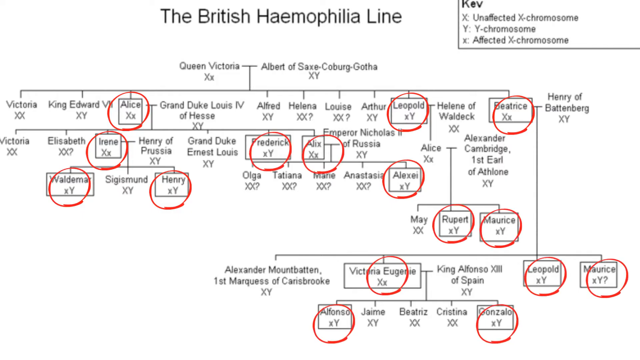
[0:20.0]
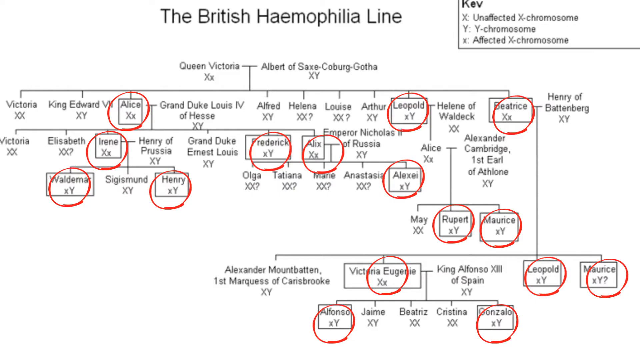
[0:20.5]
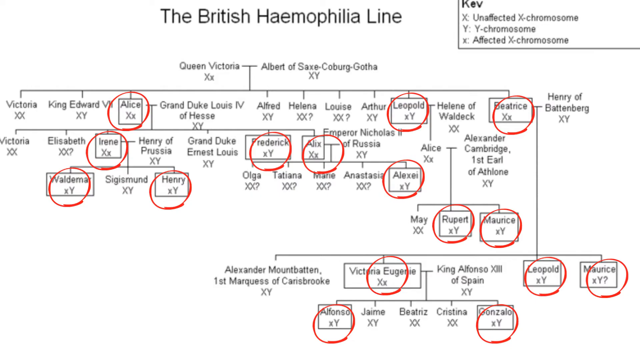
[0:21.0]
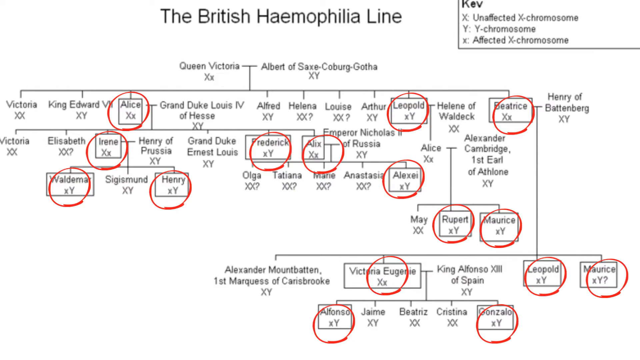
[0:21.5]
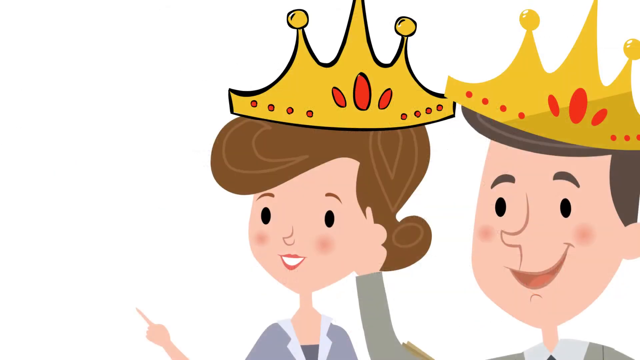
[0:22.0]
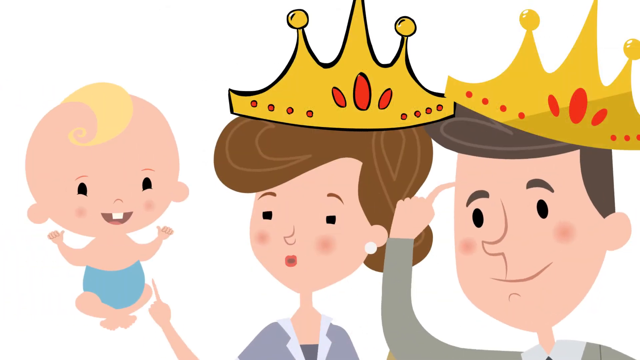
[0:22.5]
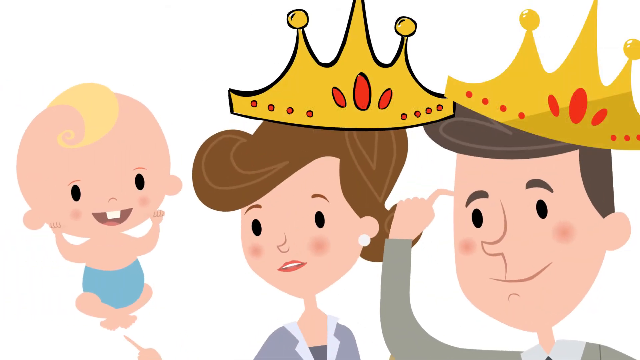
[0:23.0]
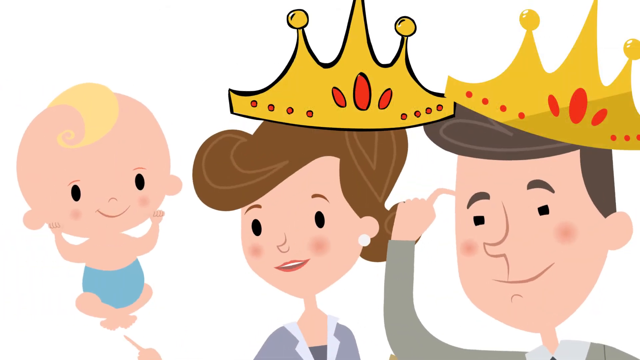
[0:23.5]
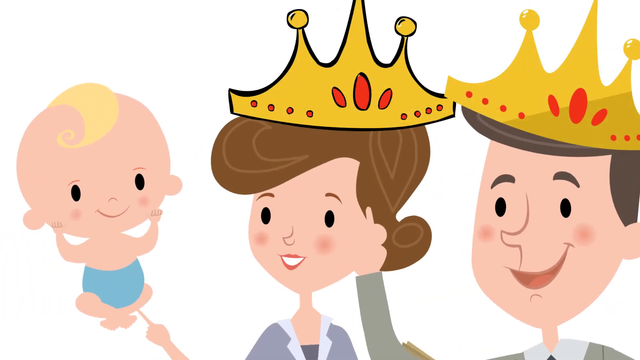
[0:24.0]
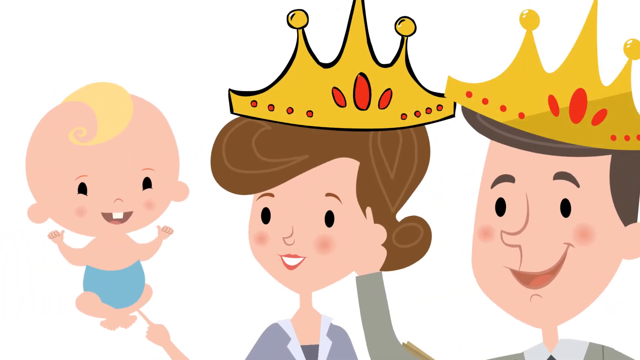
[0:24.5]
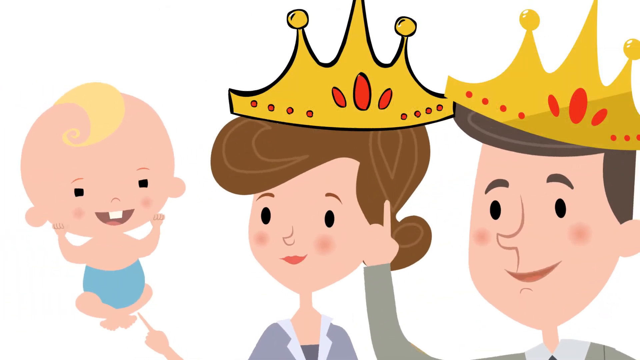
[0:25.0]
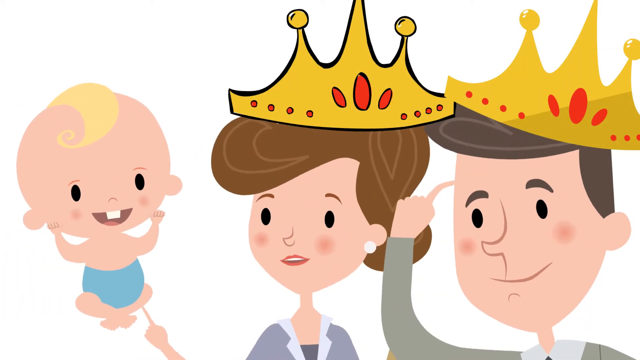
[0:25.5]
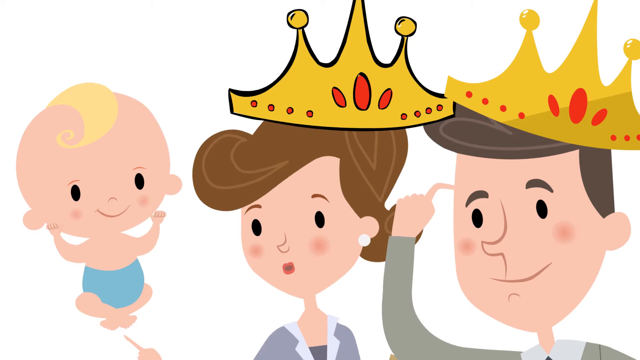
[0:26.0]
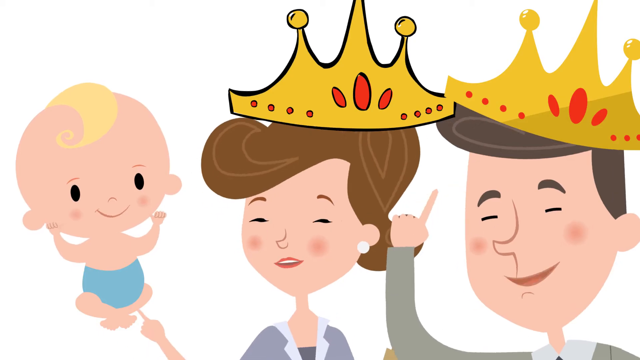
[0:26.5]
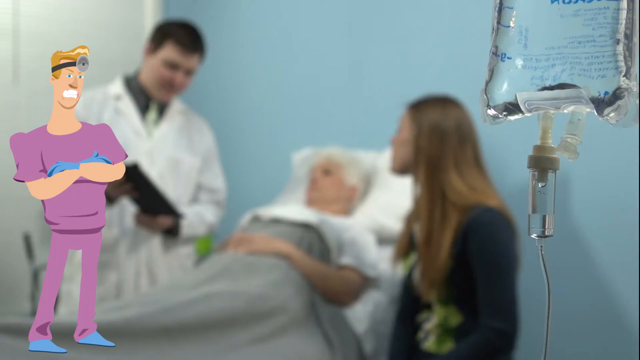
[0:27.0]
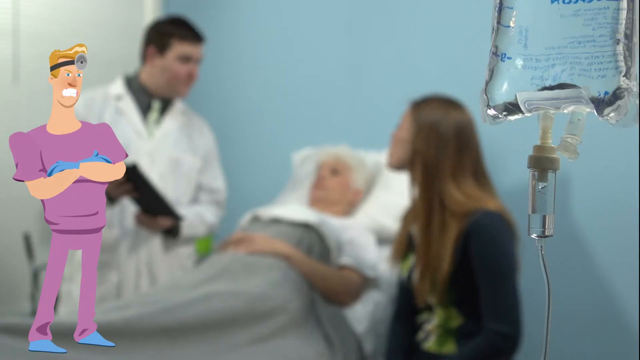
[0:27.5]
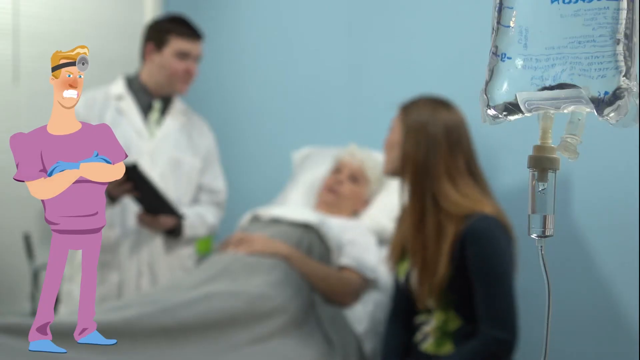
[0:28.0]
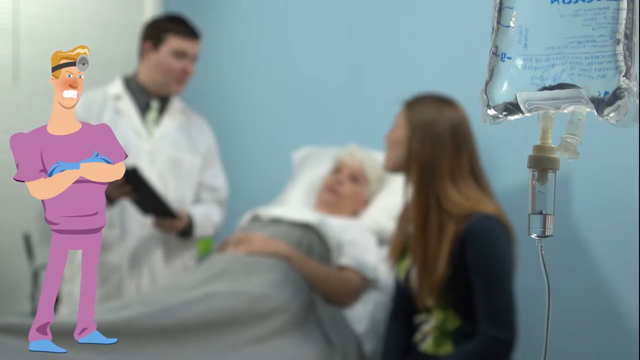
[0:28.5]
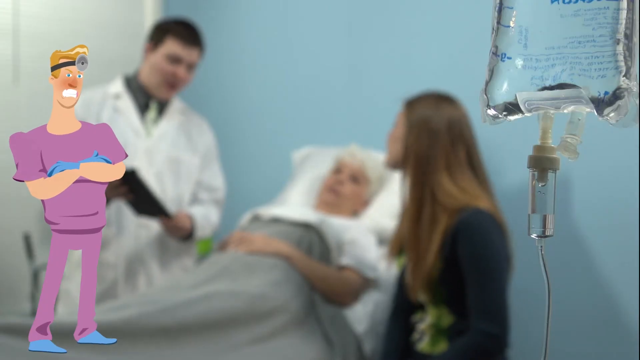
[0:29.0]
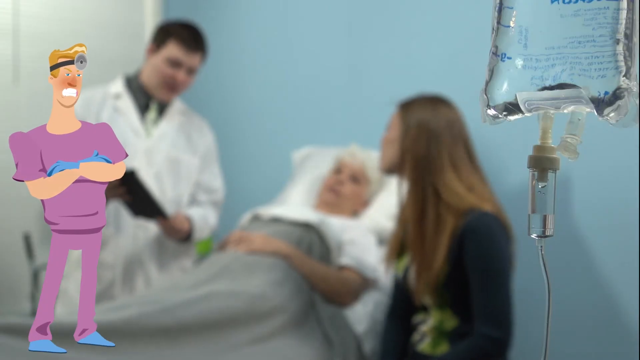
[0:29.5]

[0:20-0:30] Multiple lines have wording across them, with letters, some of which are circled in red. The animated male and female, wearing gold crowns, touch their foreheads and smile. An animated baby with a round face comes in from the left toward the female, waving both hands in the air, while the male on the right uses his right hand to stretch his right temple. A still picture follows of a female lying in a bed; toward the front is another female who looks younger, looking at a male on the far right of the woman's bed. An animated character is on the left side of the screen, facing right. He wears a purple top and bottoms, his arms are crossed left over right, and there are blue objects on his hands. His face is elongated, he shows many square teeth, and across his forehead is a black line with a silver circle toward the left of his head.